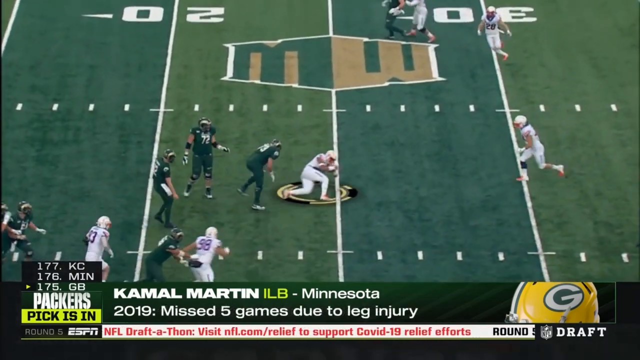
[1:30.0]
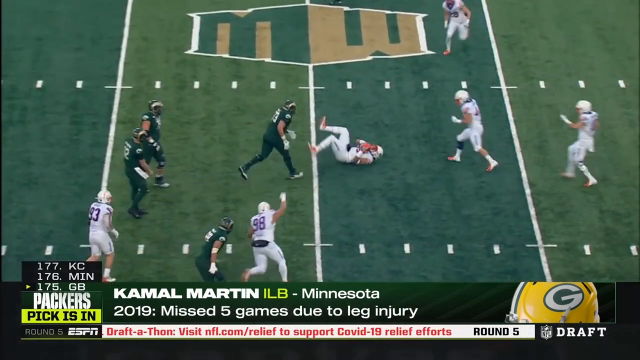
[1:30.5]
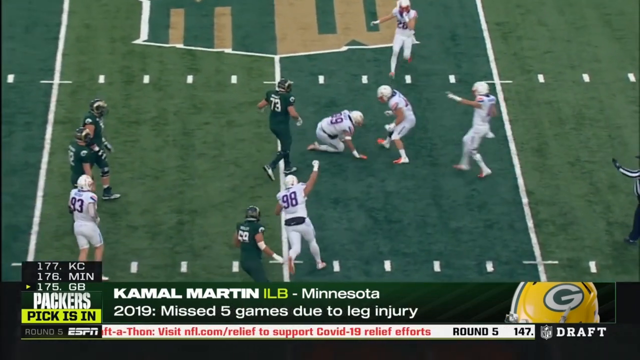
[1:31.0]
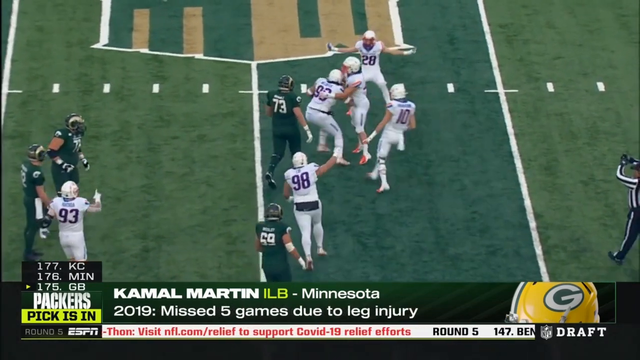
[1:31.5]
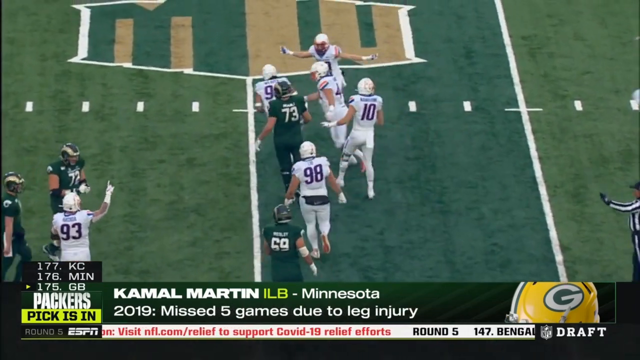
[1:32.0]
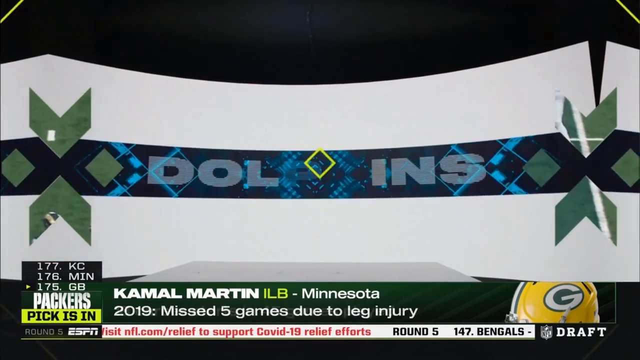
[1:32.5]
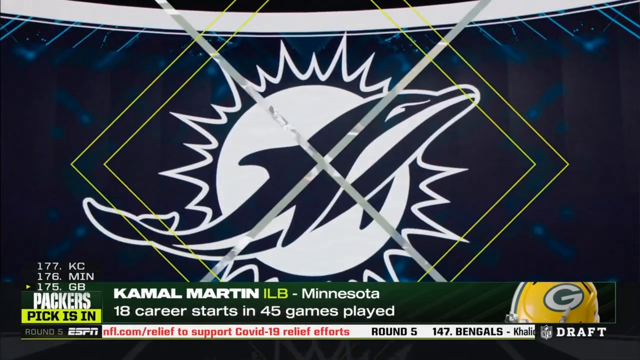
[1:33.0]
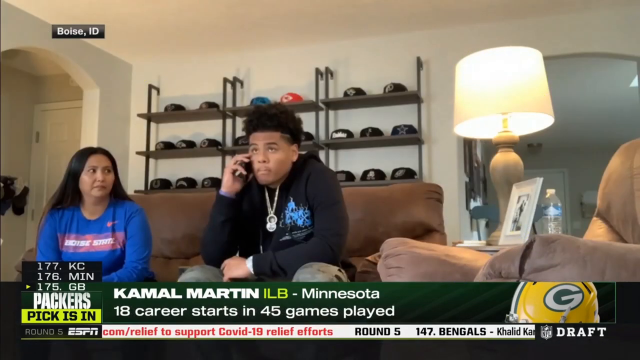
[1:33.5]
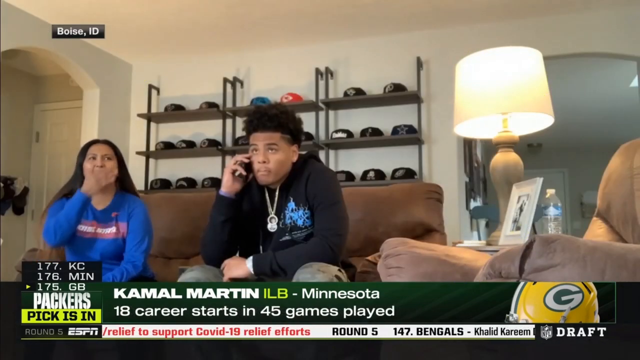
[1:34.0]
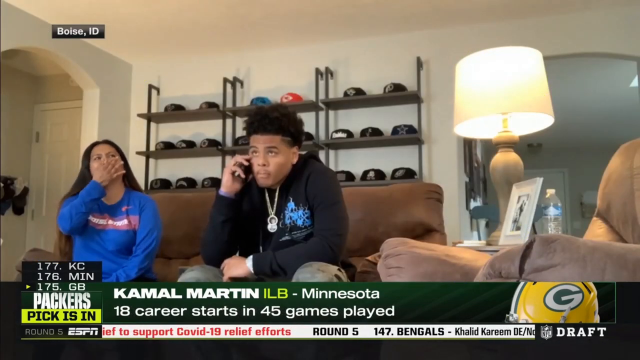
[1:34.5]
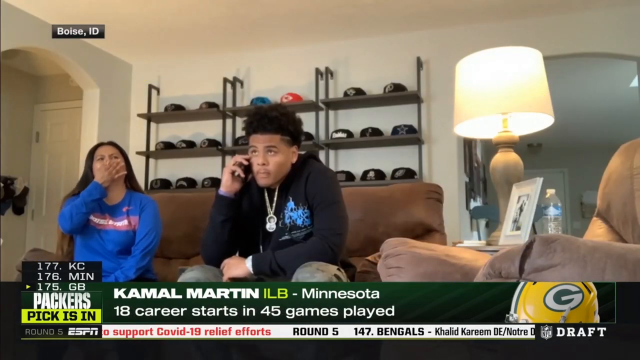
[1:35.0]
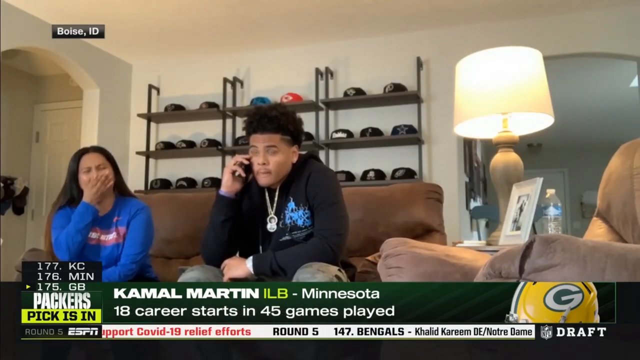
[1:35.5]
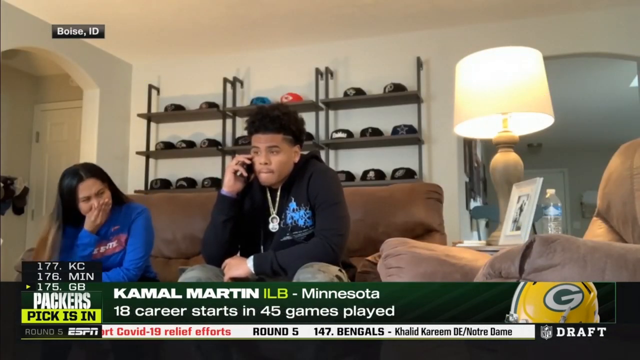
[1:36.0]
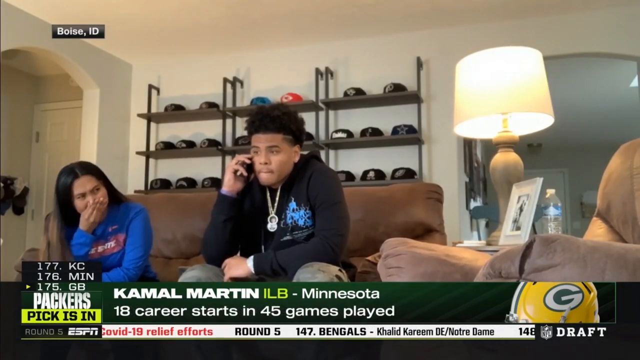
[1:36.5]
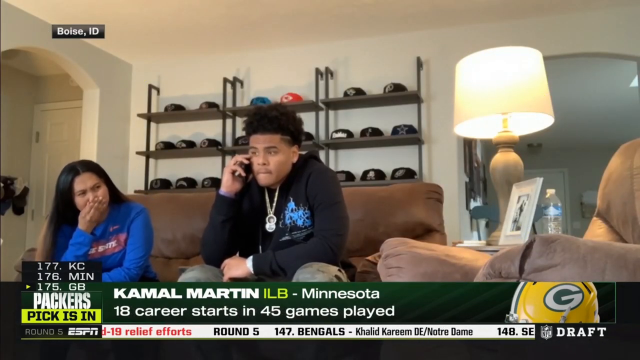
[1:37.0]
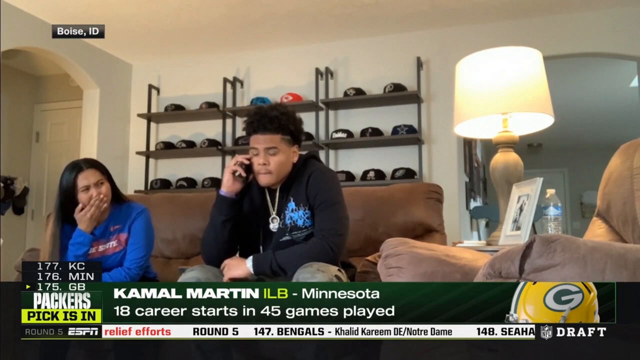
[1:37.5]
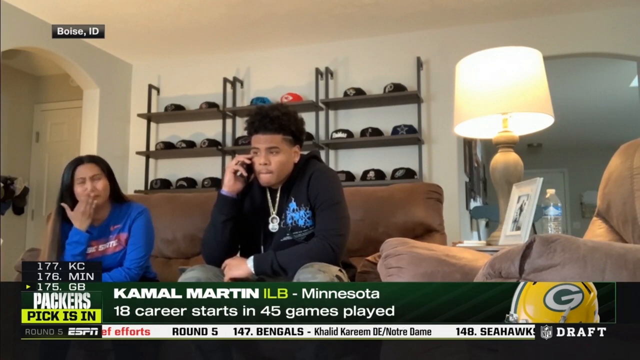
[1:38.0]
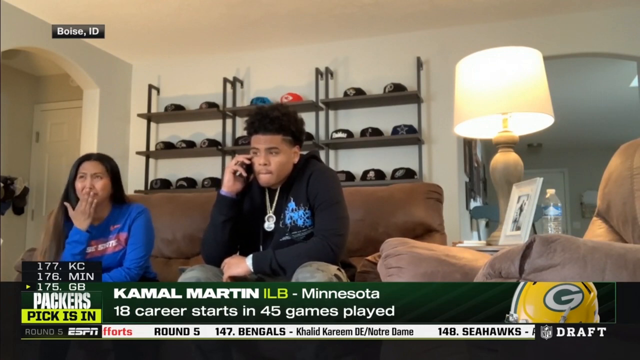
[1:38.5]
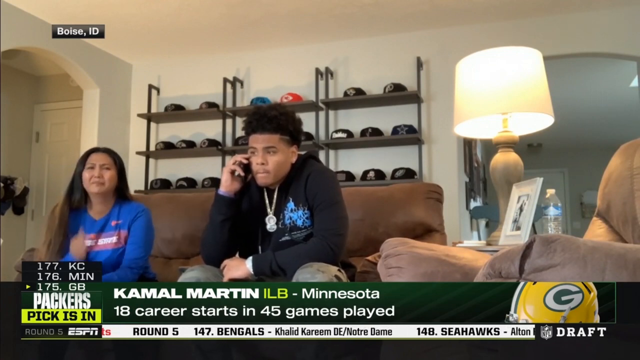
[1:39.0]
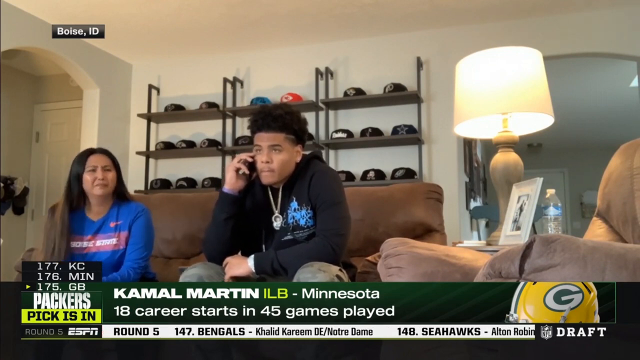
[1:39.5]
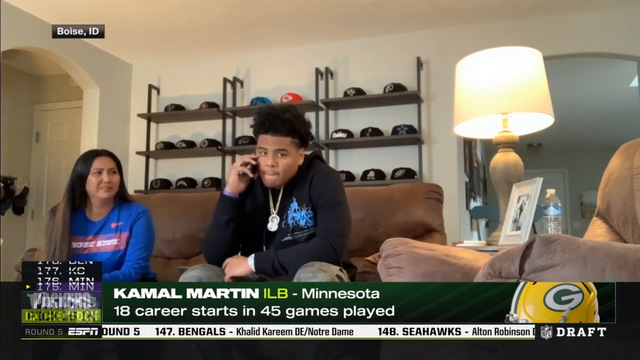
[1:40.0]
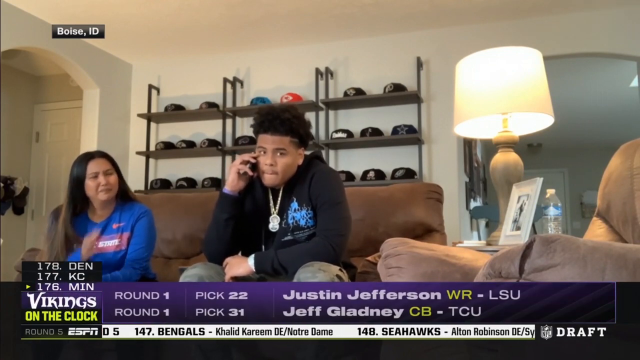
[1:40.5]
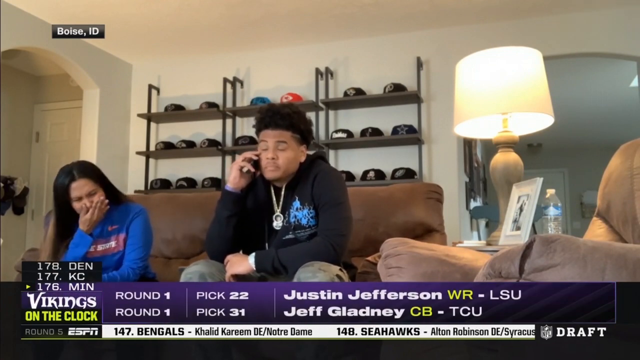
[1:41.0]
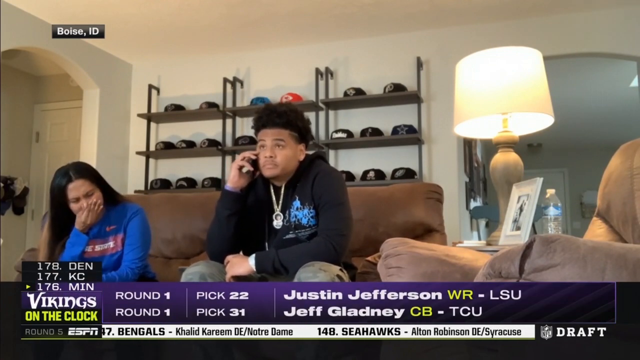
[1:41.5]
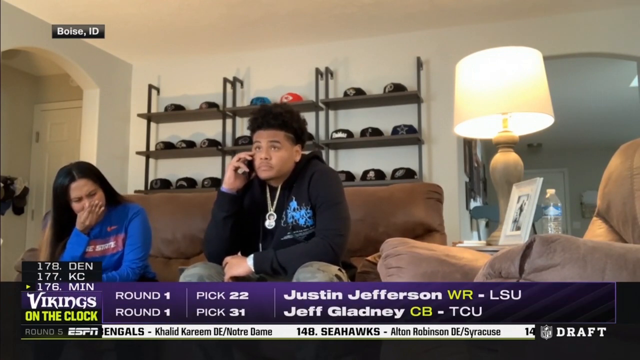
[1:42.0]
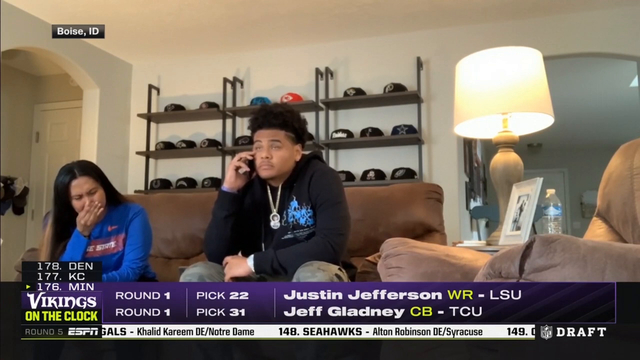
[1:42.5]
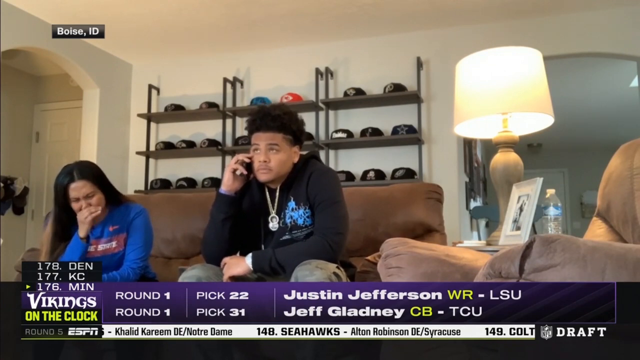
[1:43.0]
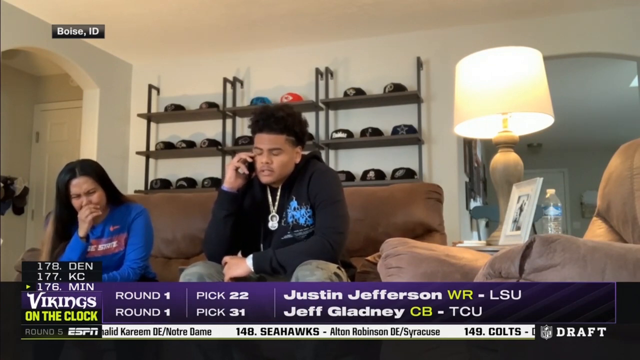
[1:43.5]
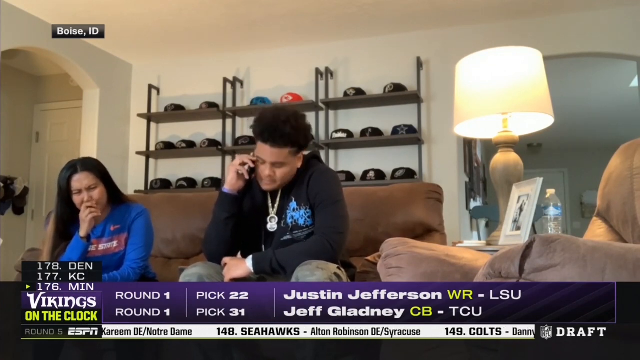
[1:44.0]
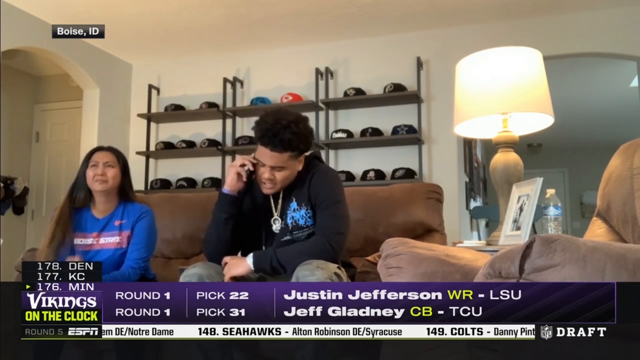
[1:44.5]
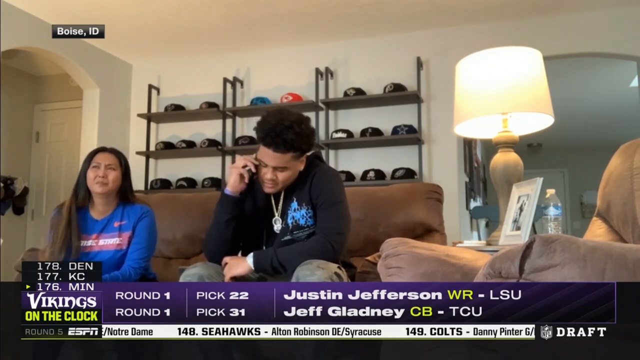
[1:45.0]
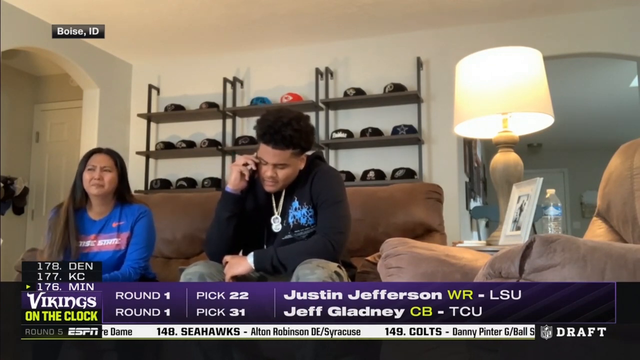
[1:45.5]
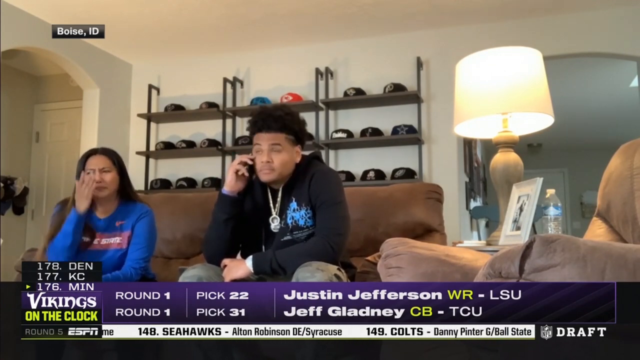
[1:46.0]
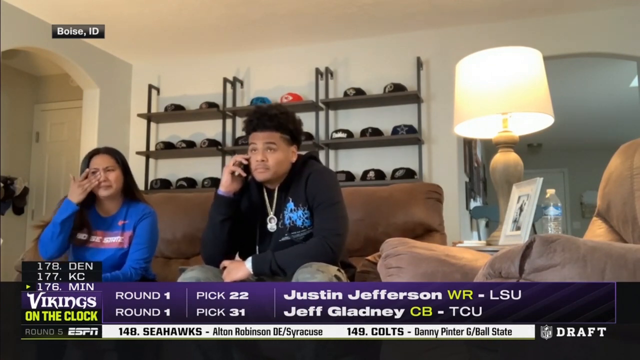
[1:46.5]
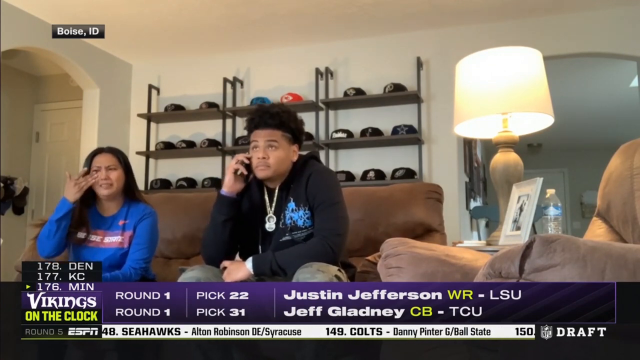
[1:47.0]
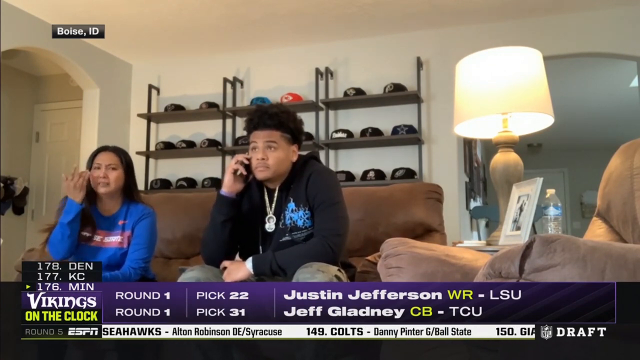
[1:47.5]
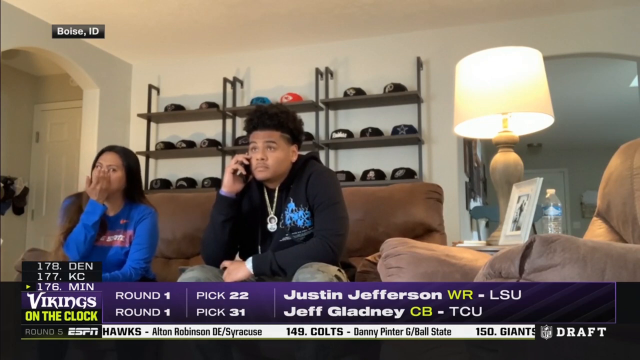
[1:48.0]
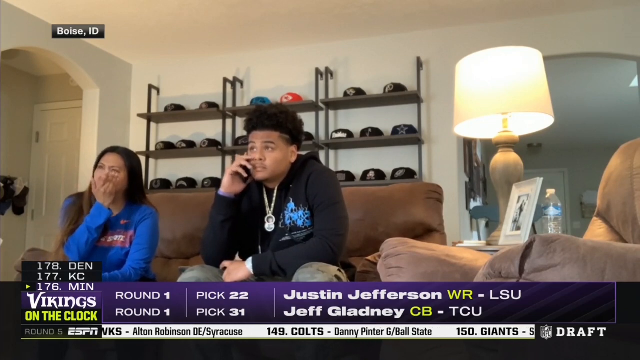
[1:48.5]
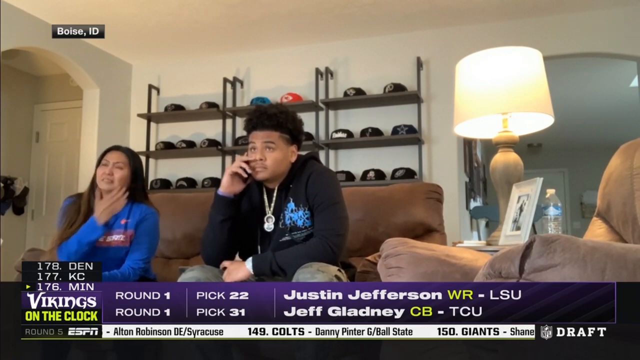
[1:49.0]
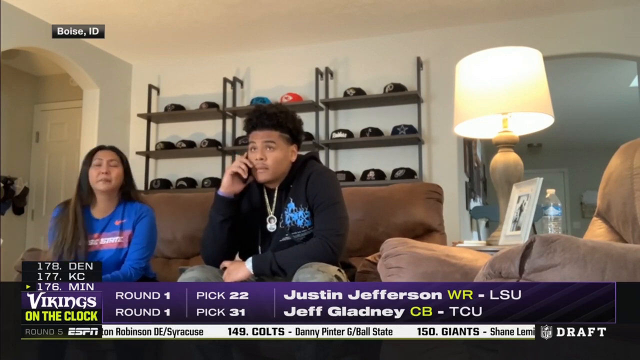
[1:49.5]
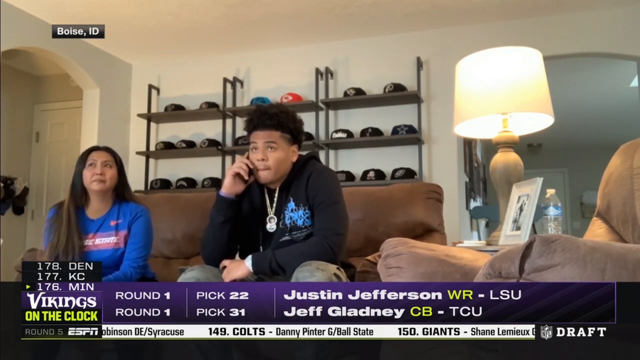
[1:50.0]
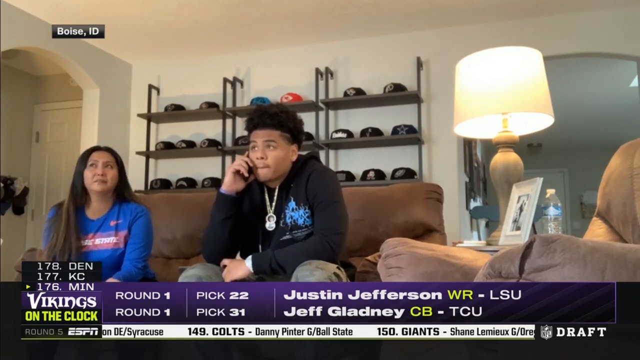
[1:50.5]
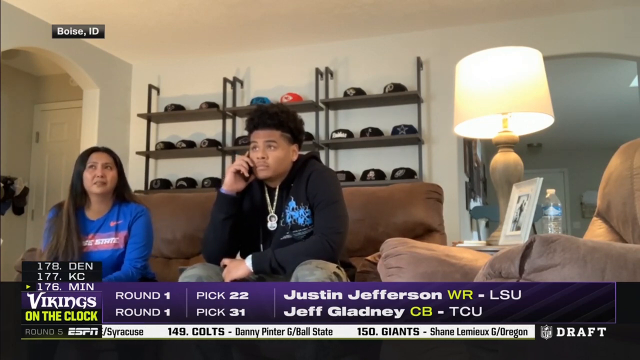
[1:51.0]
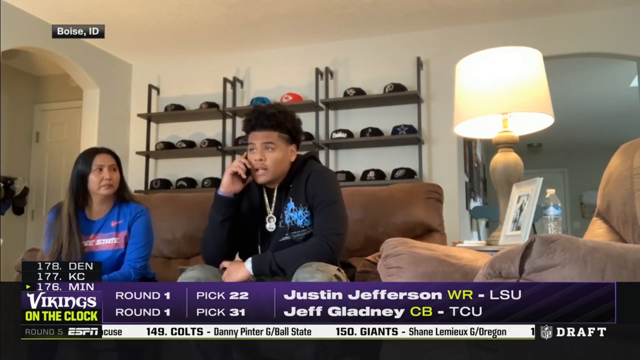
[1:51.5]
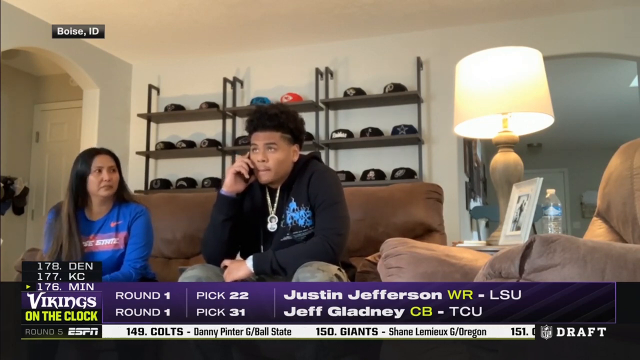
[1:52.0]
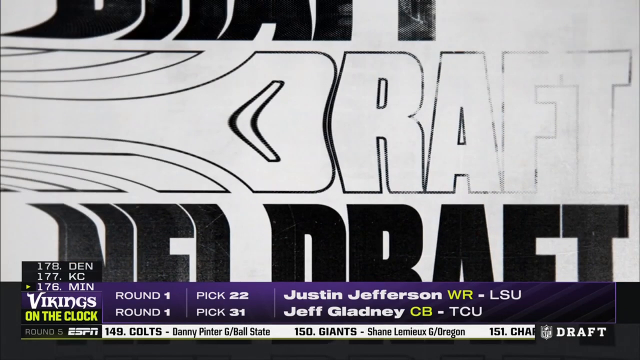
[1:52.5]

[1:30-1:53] Weaver lands after intercepting the quarterback's throw, and his teammates all run to hug him and celebrate with him. A Dolphins transition screen follows. Weaver is then sitting on a couch in his living room with what looks to be his mom next to him. He is on the phone, potentially being told that he has just been drafted, and looks very nervous and apprehensive. His mom is crying next to him and is very emotional: she has her hand up to her nose, rubbing it, and wipes tears from her eyes, first her right eye, then her left. Weaver sits calm and collected on the couch, talking on the phone, showing very little emotion in contrast to his tearful mom.